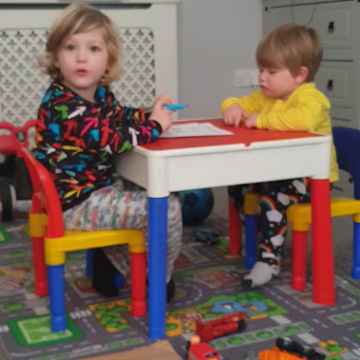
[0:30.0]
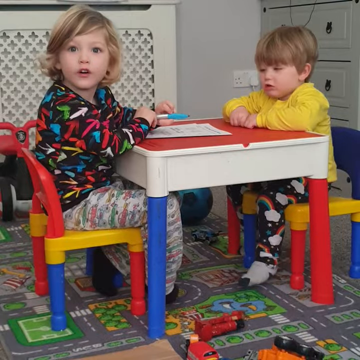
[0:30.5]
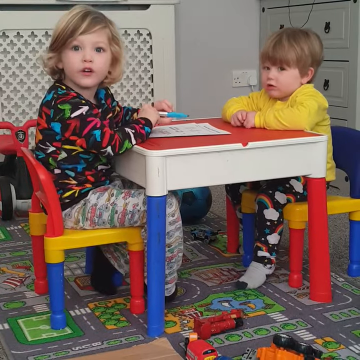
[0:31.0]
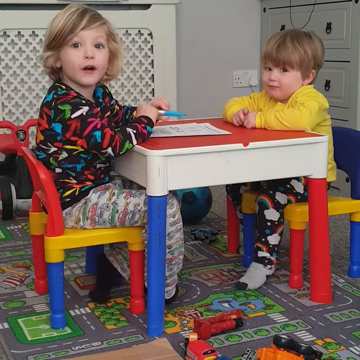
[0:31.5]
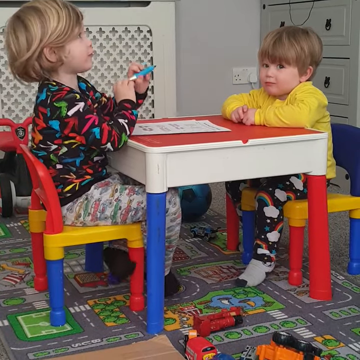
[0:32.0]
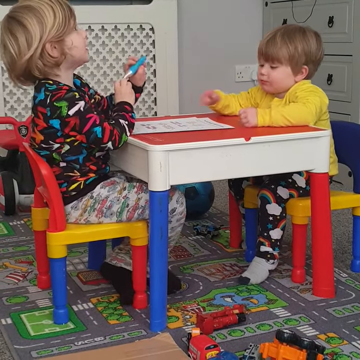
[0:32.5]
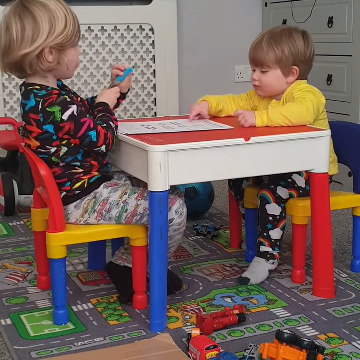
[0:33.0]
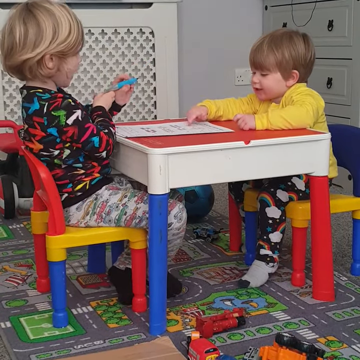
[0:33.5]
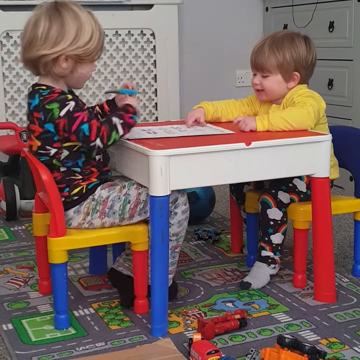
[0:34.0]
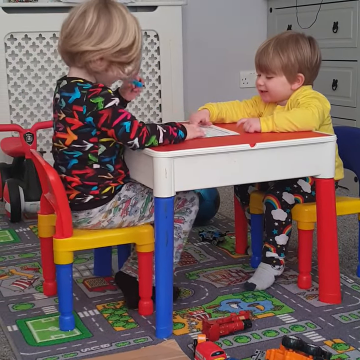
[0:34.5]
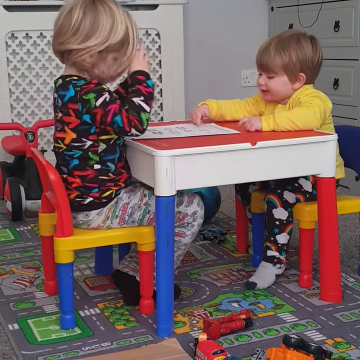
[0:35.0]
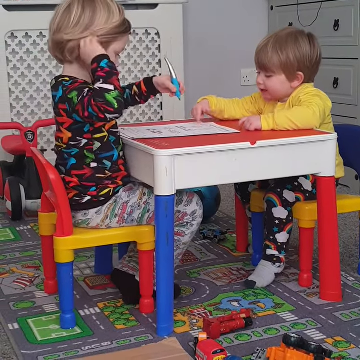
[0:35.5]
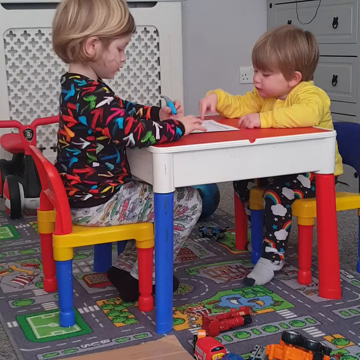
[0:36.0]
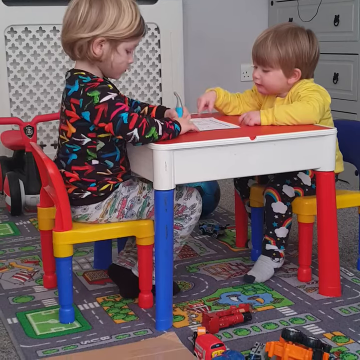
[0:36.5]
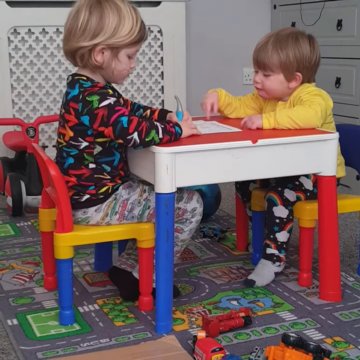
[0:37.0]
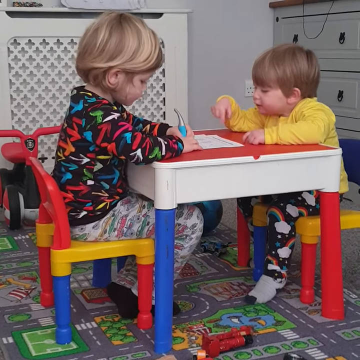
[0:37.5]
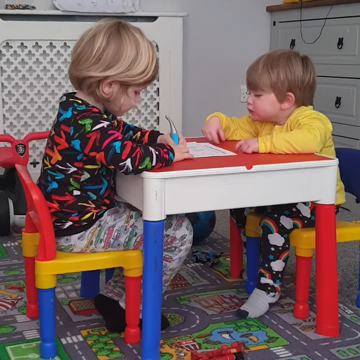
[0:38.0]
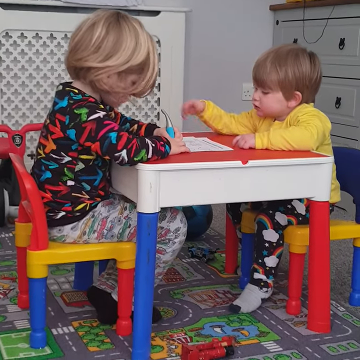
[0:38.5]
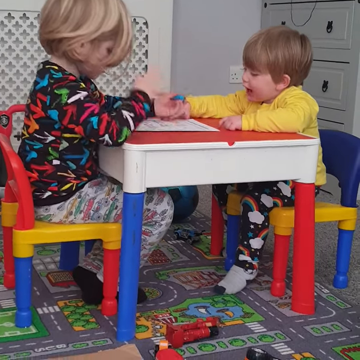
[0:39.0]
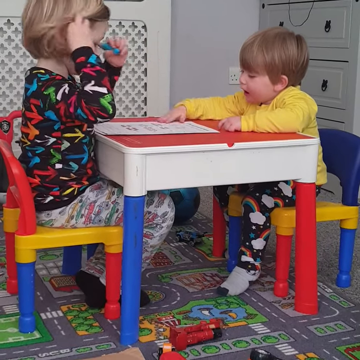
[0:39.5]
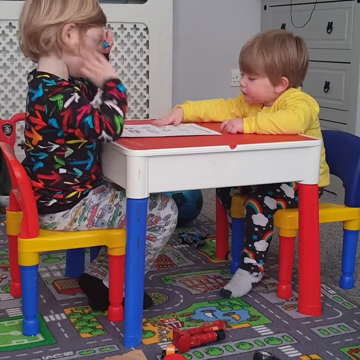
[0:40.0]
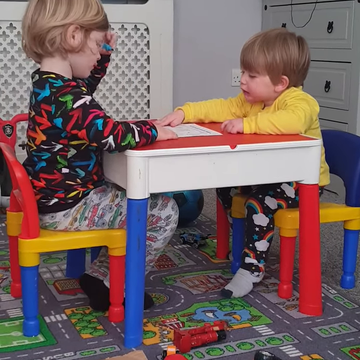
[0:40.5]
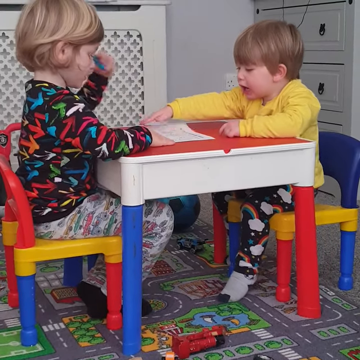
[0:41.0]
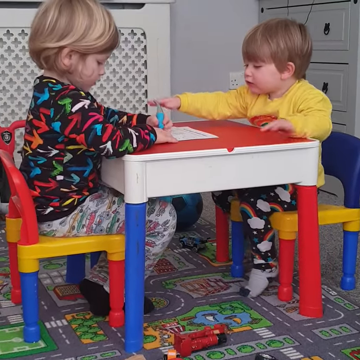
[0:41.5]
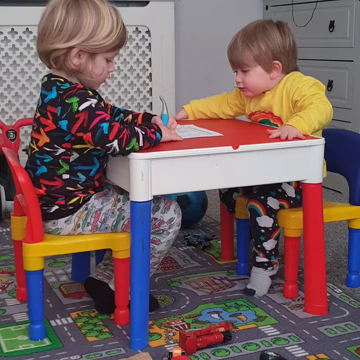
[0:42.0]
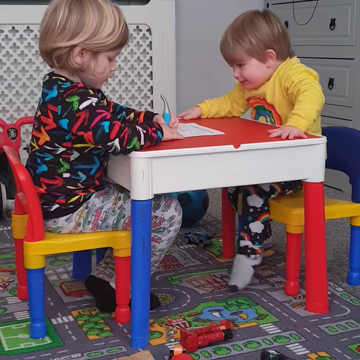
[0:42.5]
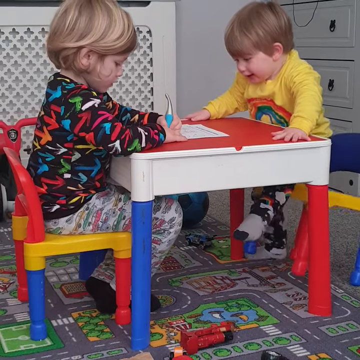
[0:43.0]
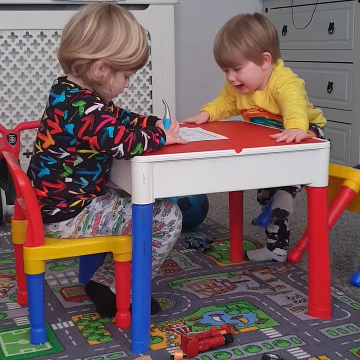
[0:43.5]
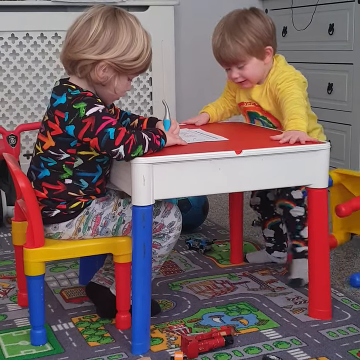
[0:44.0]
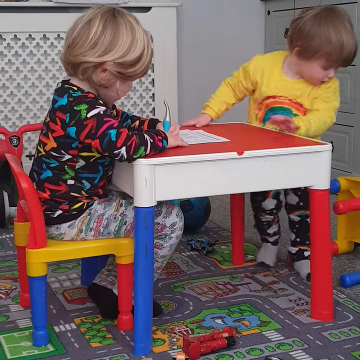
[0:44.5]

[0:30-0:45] The older child looks at a parent or adult, then goes back to drawing on his paper with the marker. The younger child keeps tapping on the paper, opens his hand flat and taps on the table and paper, and then stands up. As he stands, the chair falls backward behind him, but he does not fall down. He turns around quite swiftly and looks at the fallen chair. Meanwhile, the older child appears not to notice and continues to draw on the paper.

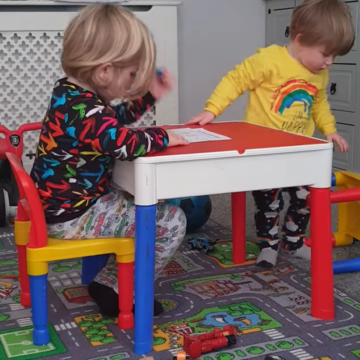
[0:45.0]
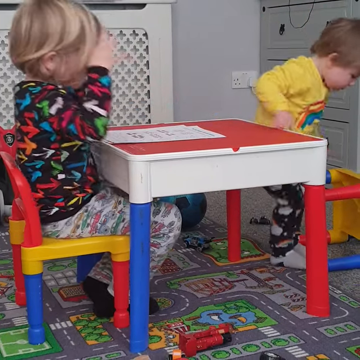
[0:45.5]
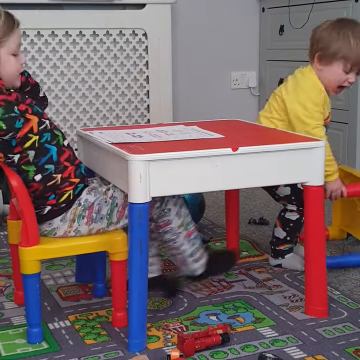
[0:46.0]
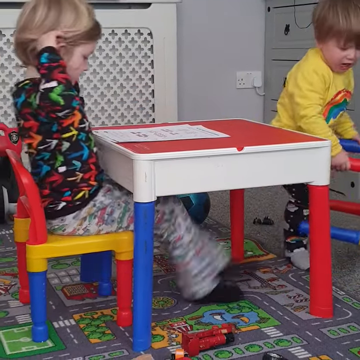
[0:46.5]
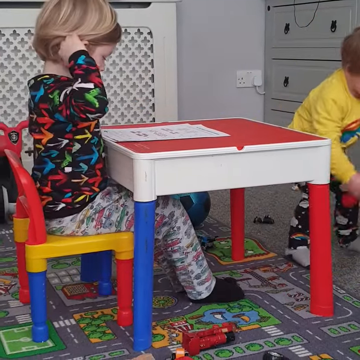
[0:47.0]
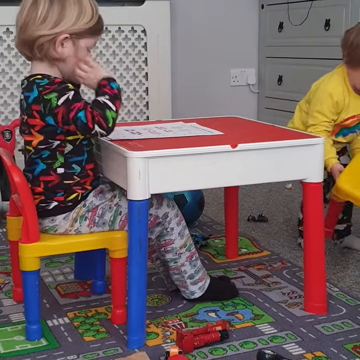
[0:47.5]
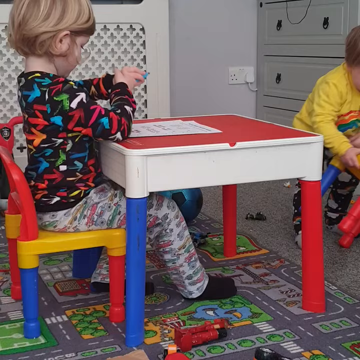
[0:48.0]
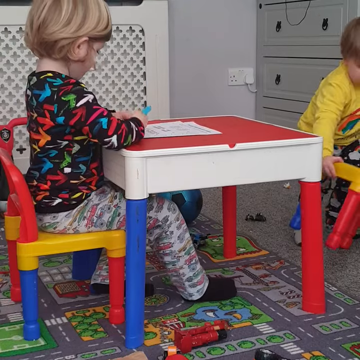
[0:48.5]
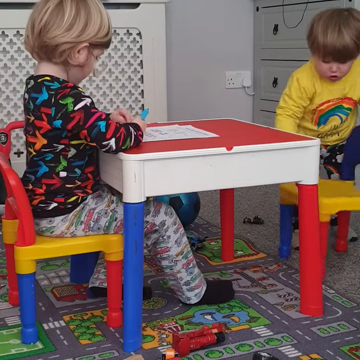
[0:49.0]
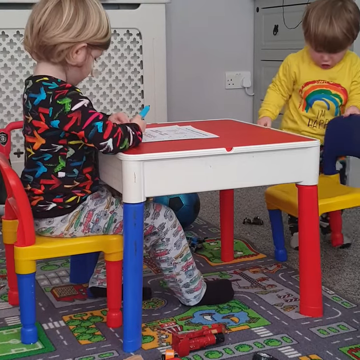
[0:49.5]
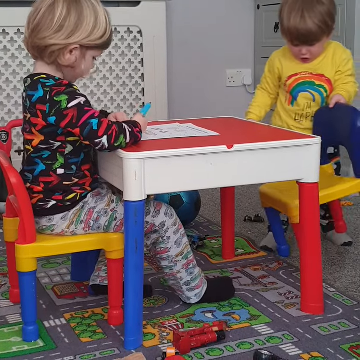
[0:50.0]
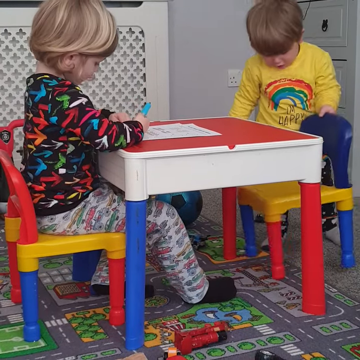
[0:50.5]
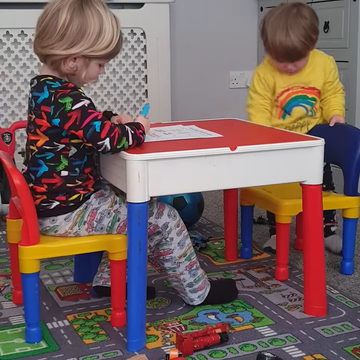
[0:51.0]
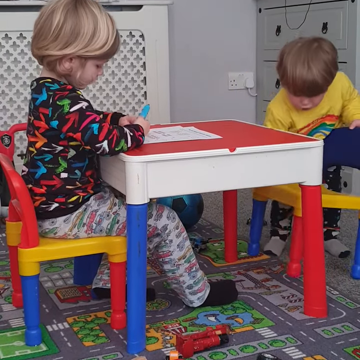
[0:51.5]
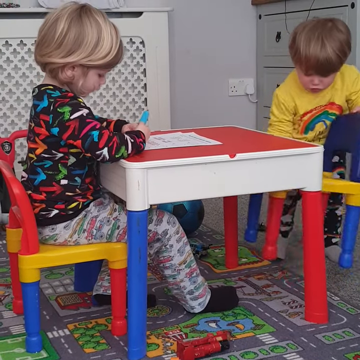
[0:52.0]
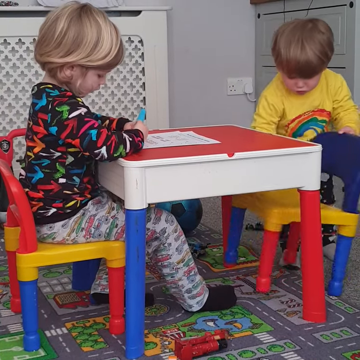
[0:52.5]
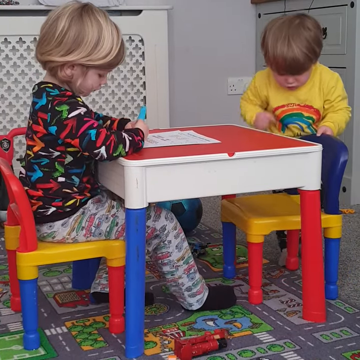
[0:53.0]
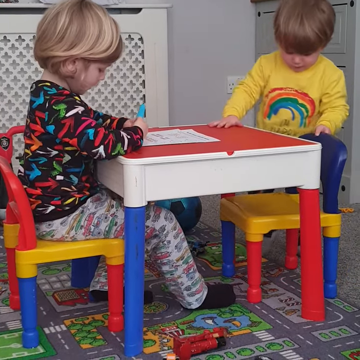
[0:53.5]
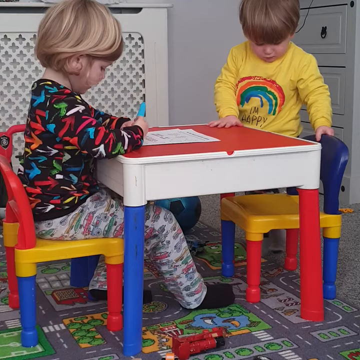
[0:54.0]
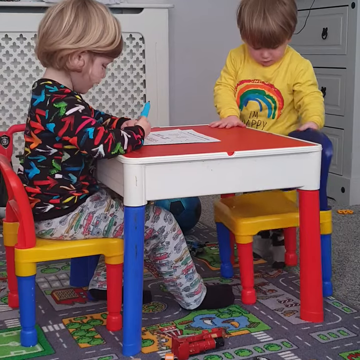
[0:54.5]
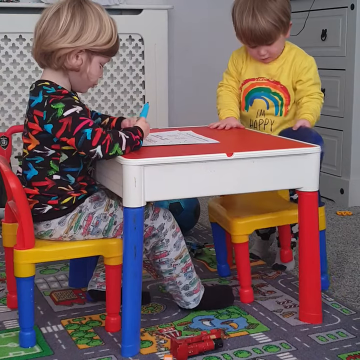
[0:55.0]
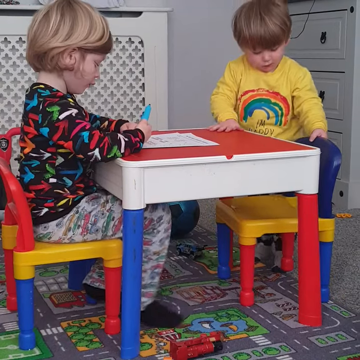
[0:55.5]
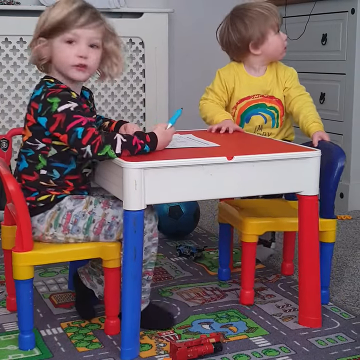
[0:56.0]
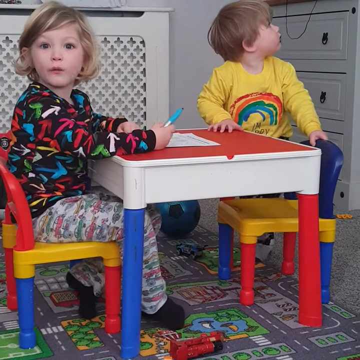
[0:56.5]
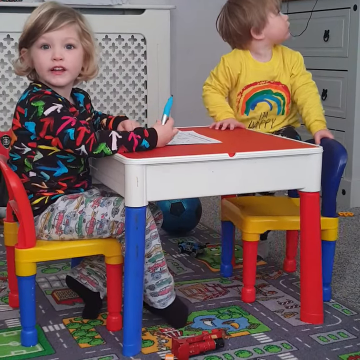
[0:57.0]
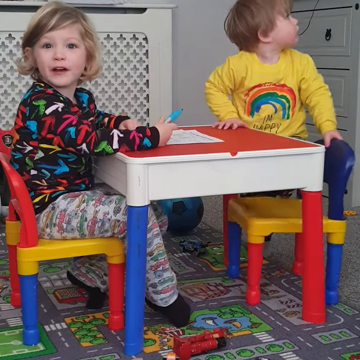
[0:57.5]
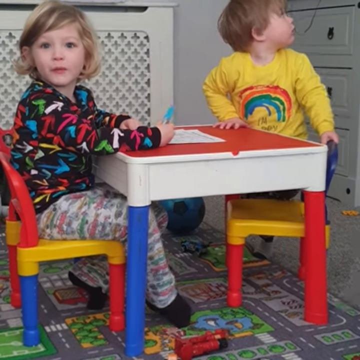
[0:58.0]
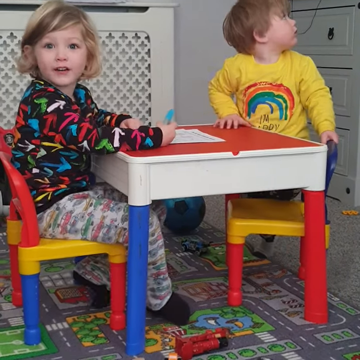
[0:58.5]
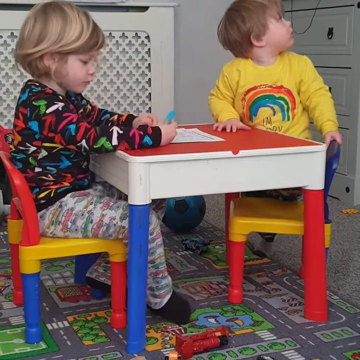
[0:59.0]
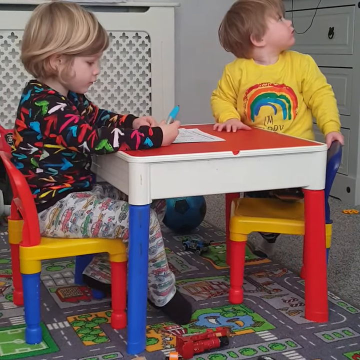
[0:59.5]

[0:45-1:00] The younger child's shirt says "I'm happy". He turns around, picks up the chair, and appears to push it back in at the table. He looks like he may want to sit back in it, but the chair is too far in; as he lifts his leg, he turns around and looks up, perhaps at a TV. The chair appears a little wobbly as he tries to get back into it. Meanwhile, the older child continues drawing on the paper with the writing utensil, then turns to the parent or adult again and says something, with less of the look of awe he had a few seconds earlier.